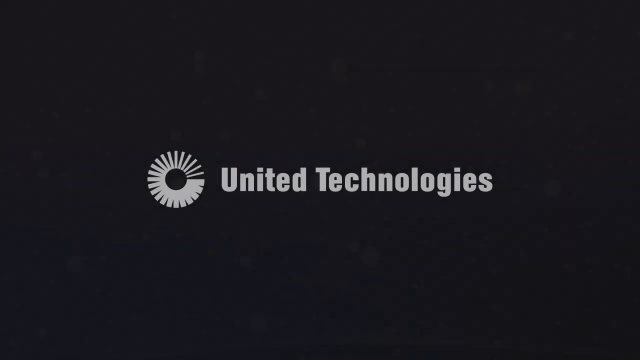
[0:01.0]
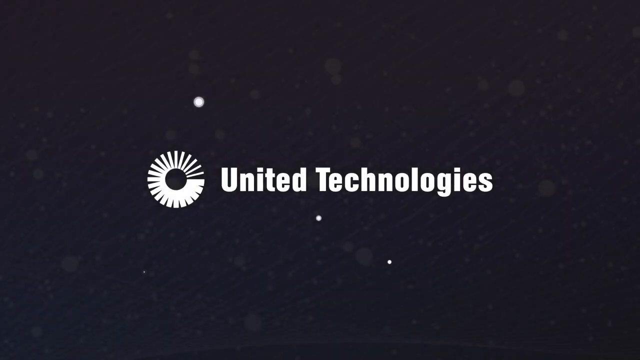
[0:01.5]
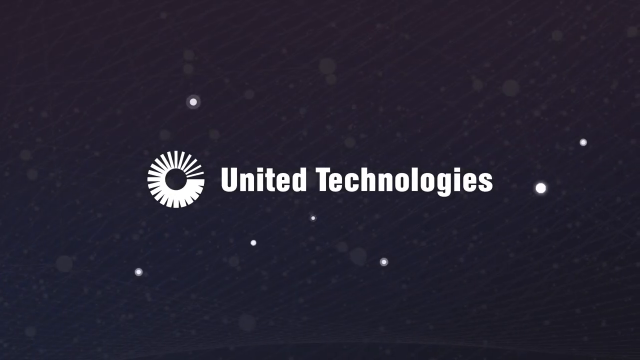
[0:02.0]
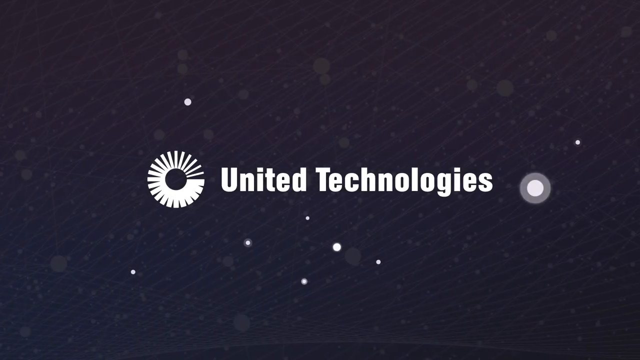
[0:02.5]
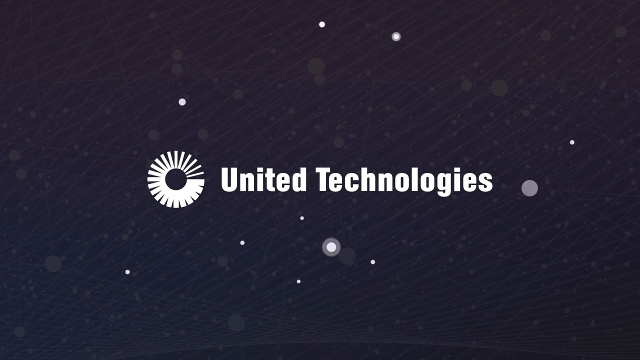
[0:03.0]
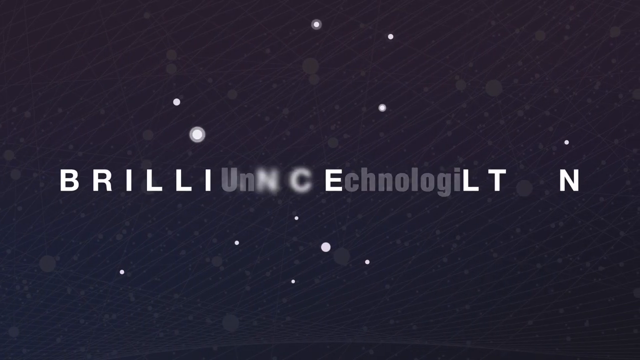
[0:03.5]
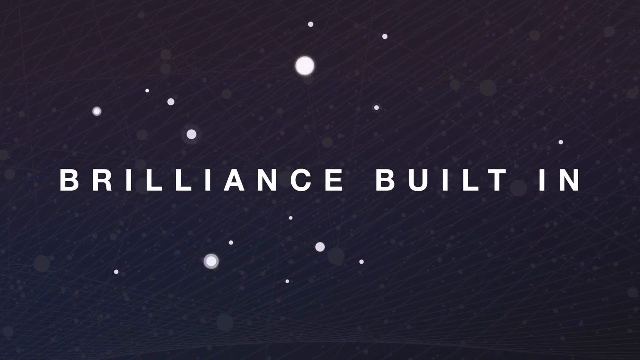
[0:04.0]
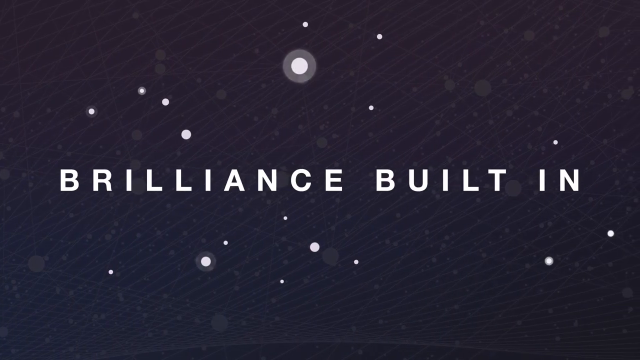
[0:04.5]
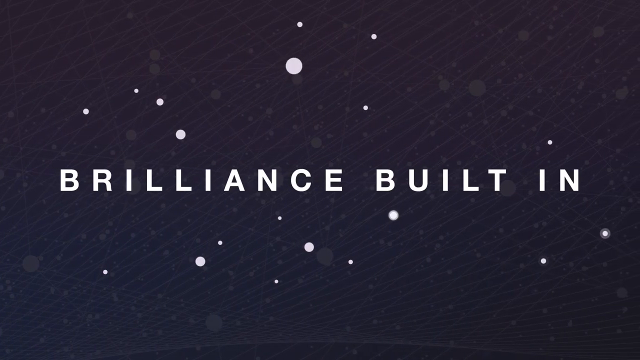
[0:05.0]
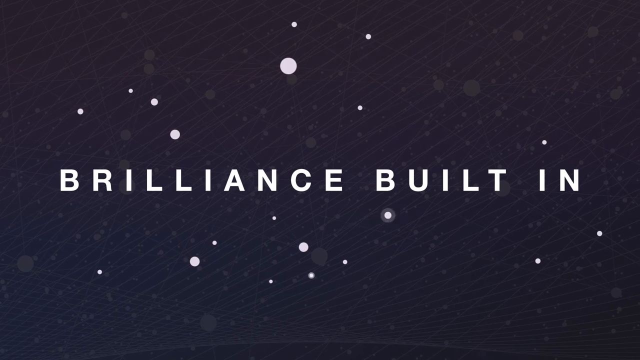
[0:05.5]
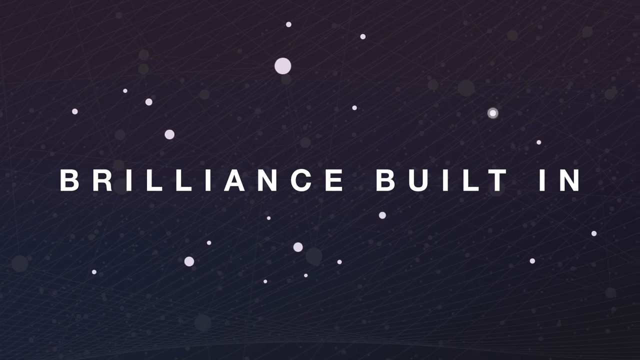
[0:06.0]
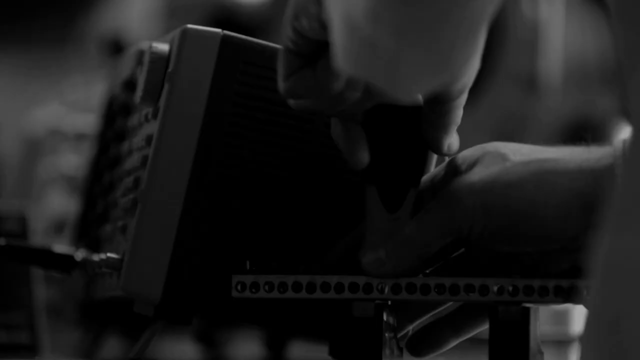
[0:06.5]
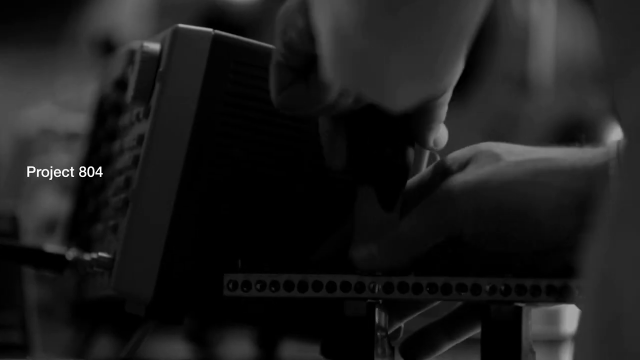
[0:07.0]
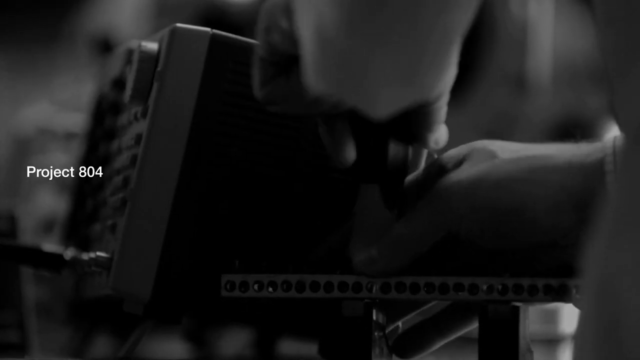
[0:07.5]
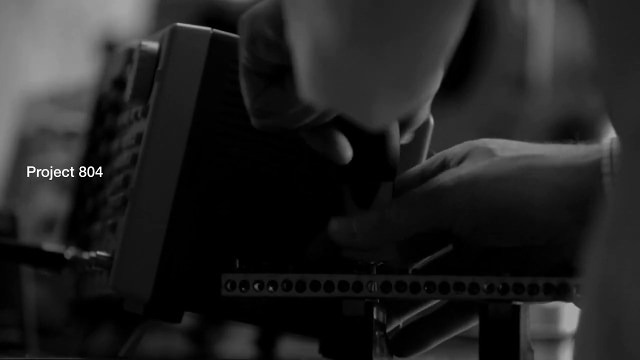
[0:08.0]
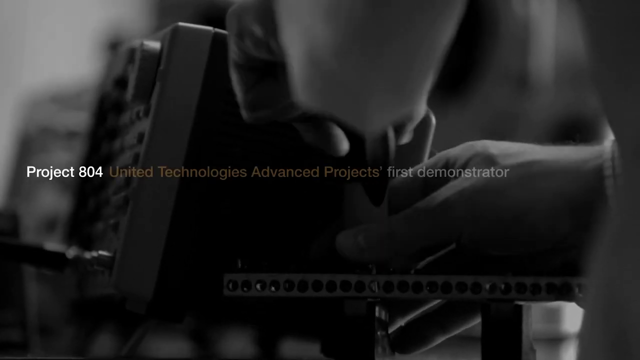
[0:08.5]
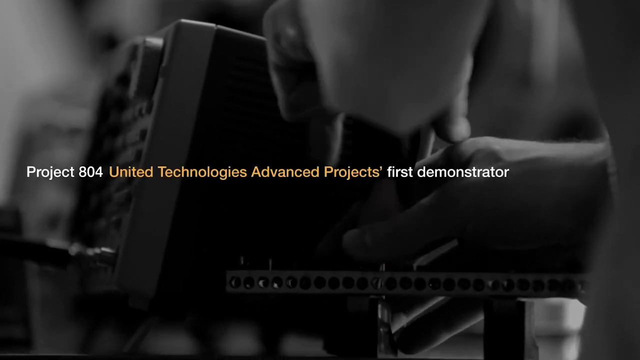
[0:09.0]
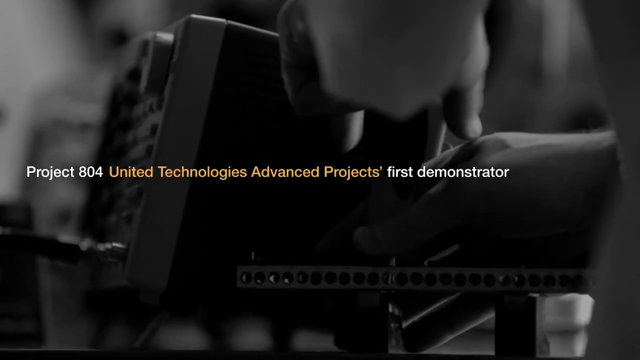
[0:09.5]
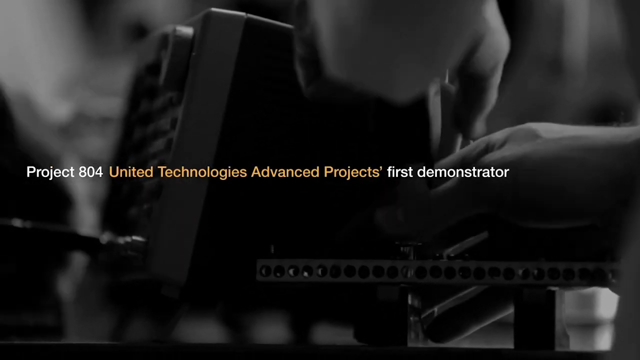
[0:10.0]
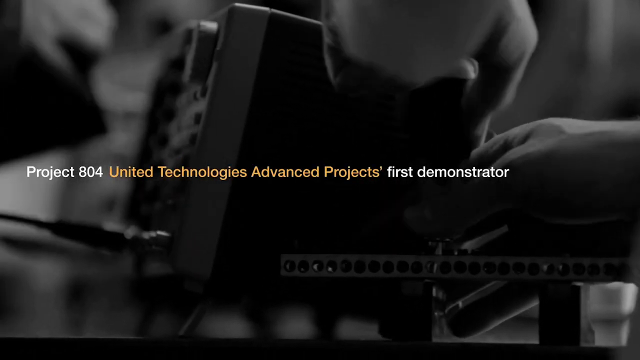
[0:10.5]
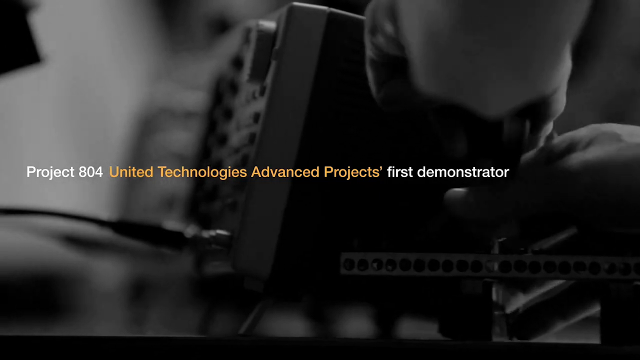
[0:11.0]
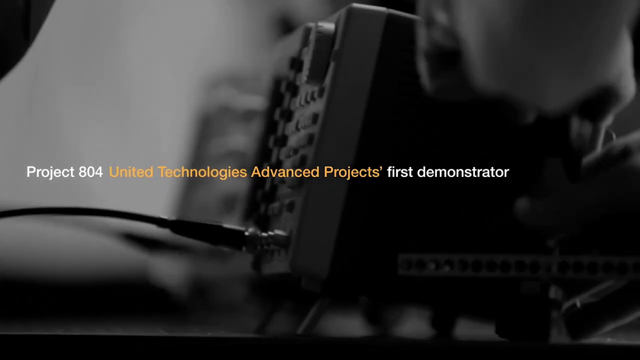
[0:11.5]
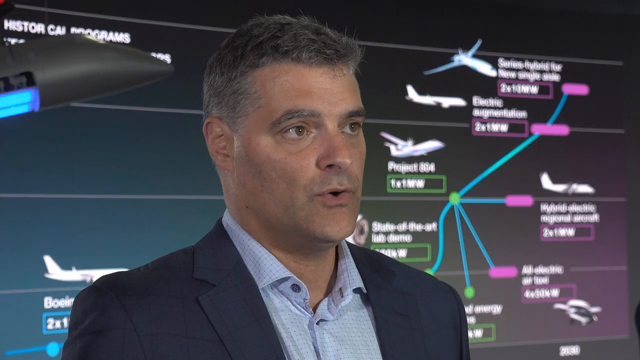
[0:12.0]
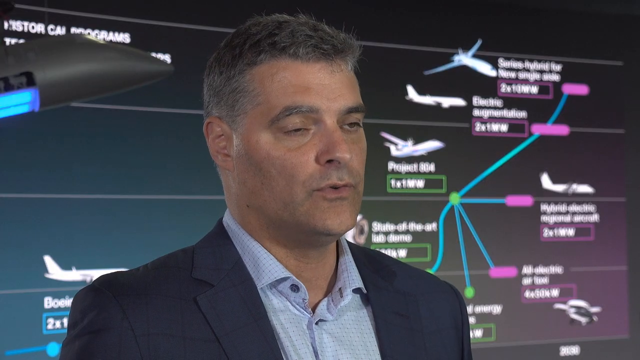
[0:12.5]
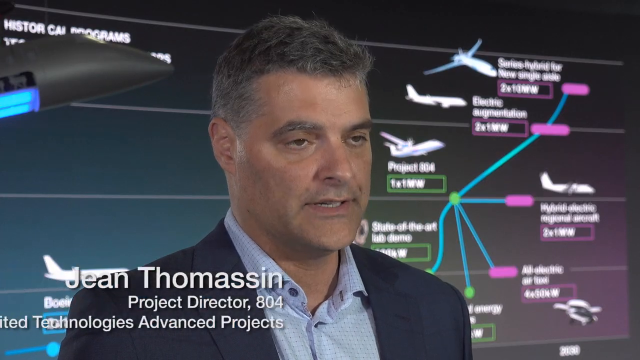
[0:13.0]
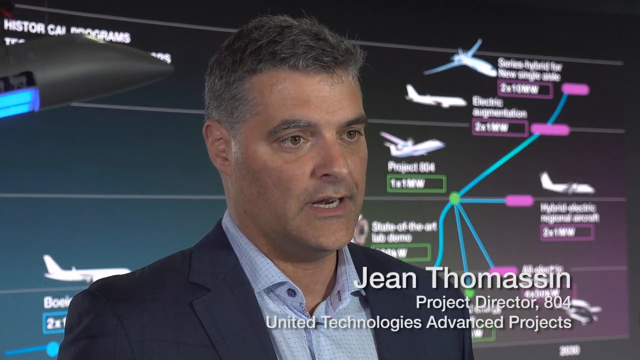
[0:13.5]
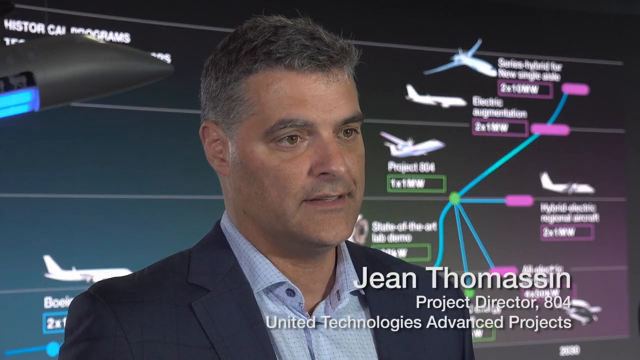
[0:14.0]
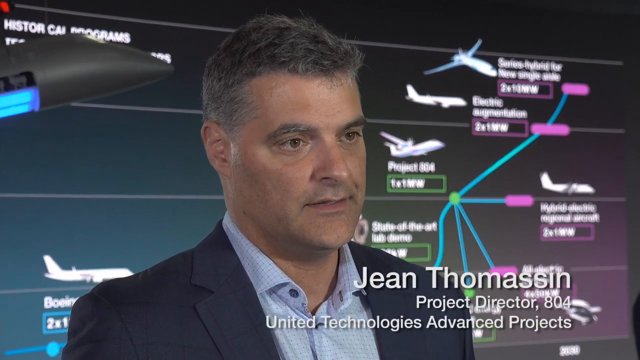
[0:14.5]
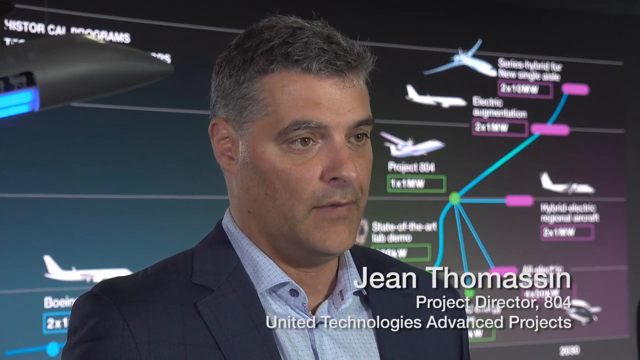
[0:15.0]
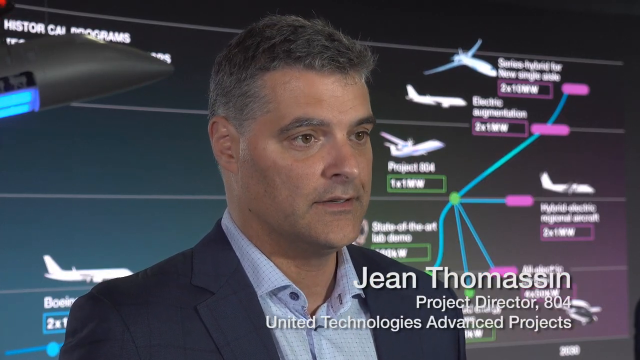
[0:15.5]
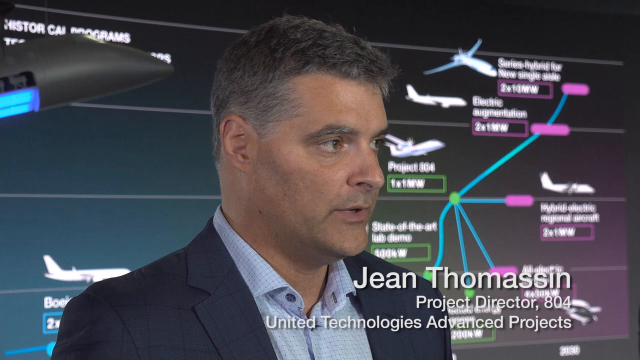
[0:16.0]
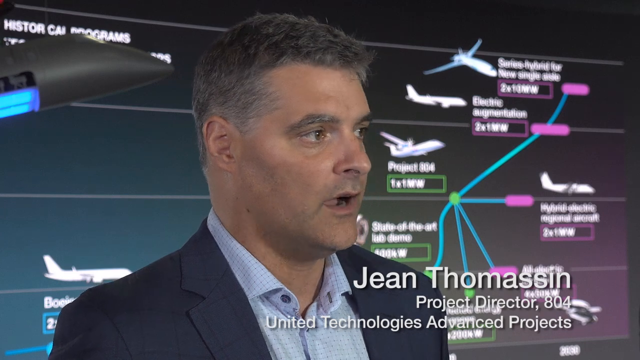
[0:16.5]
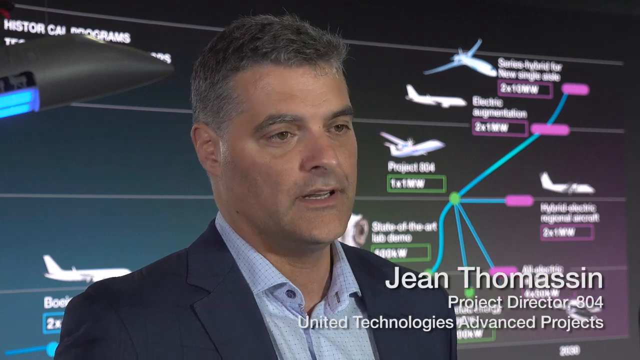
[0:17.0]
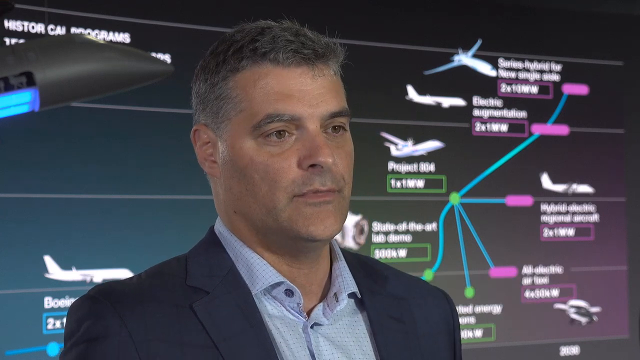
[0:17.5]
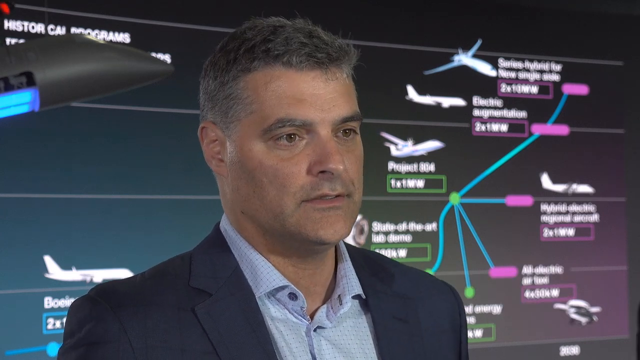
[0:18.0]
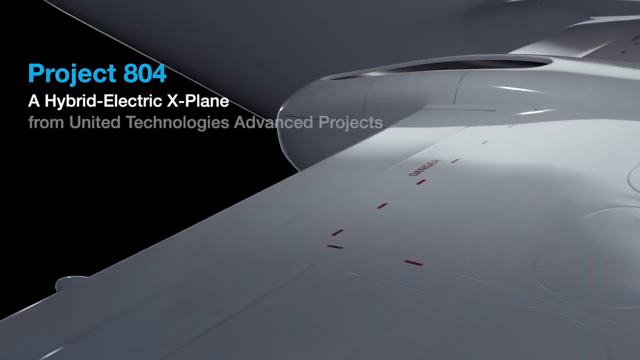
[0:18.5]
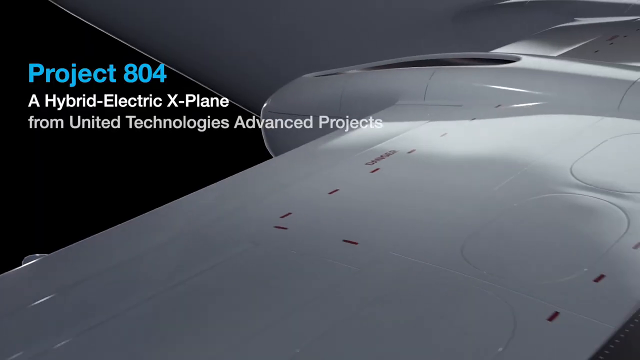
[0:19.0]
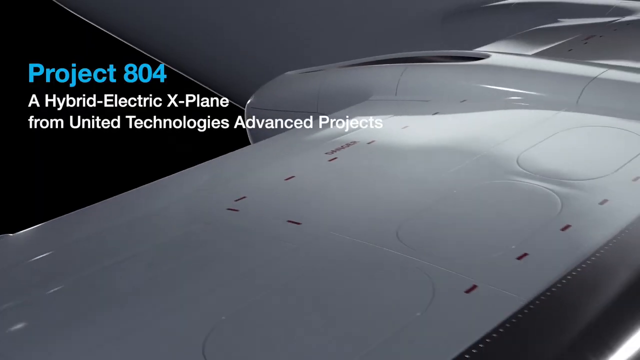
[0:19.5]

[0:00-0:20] The video opens on a black screen in which little flecks of white dots appear to be forming. The words "United Technologies" appear on the screen with a couple of little dots around them and an image of a cut-paper flower design at the end of the name. A texture forms behind the words, and little white dots or dust are all over, in the air or on the surface. Words then form on the screen reading "brilliance built in," and the shot lingers on the dust and particles for a bit. The scene changes to "project 804," showing someone with very delicate hands working on some kind of hand tool, possibly turning a screwdriver. Text reads "United Technologies Advanced Projects, first demonstrator." A man then appears; he says his name is John Thompson, project director of 804, United Technologies Advanced Projects.